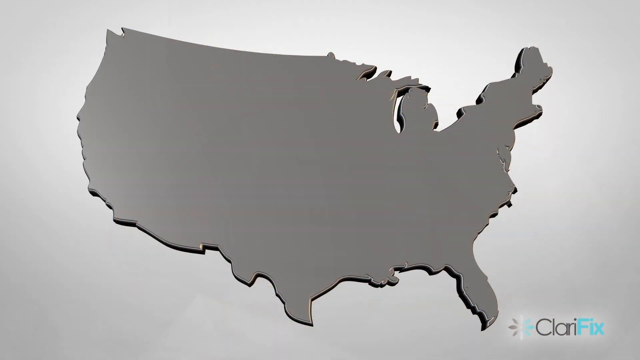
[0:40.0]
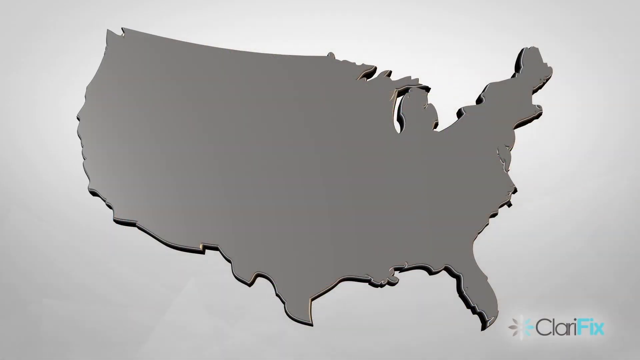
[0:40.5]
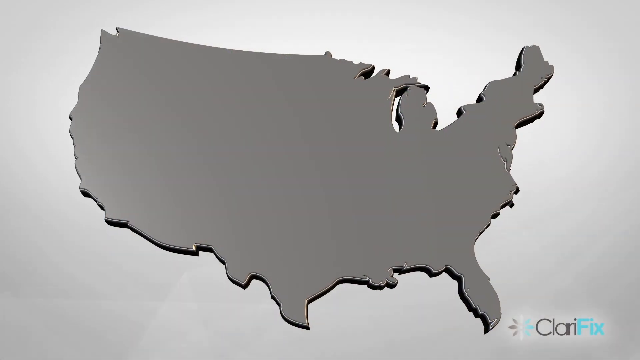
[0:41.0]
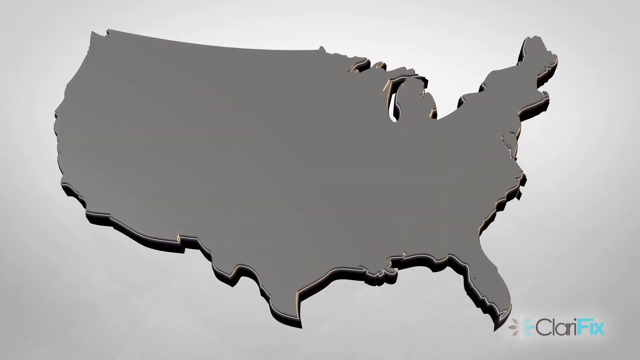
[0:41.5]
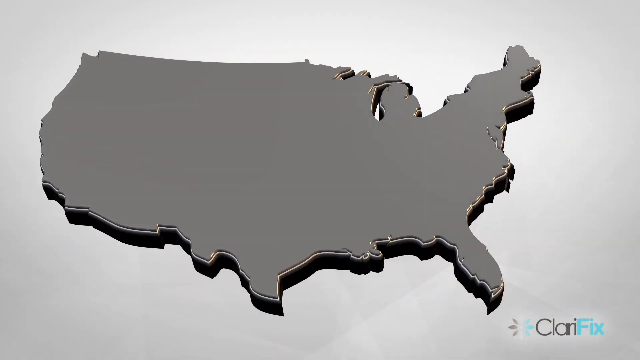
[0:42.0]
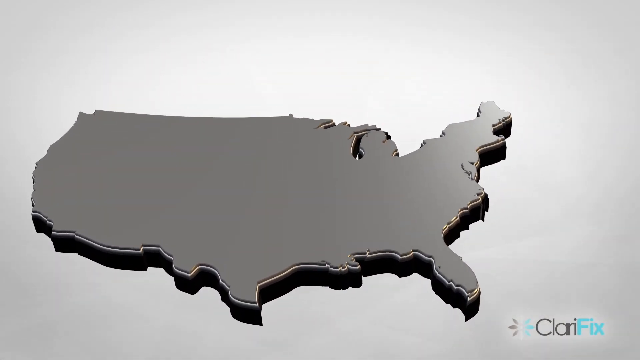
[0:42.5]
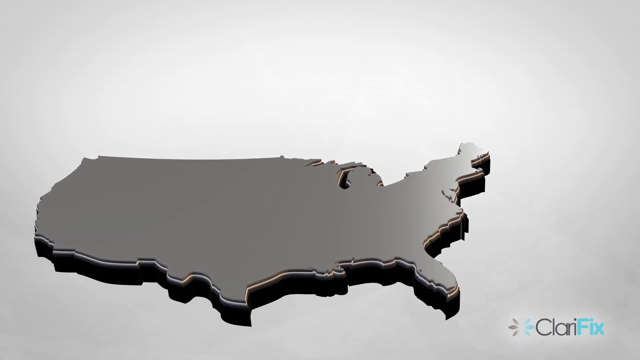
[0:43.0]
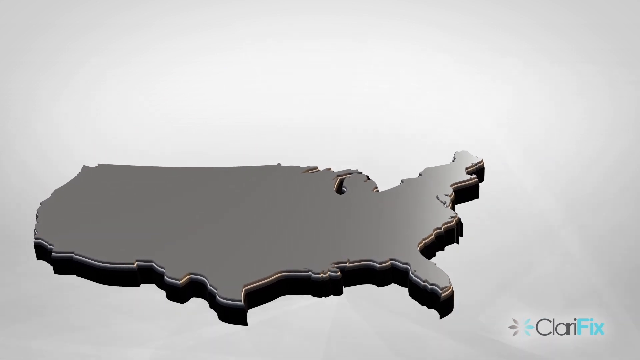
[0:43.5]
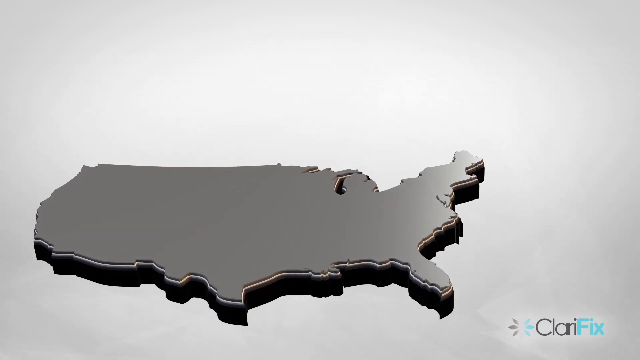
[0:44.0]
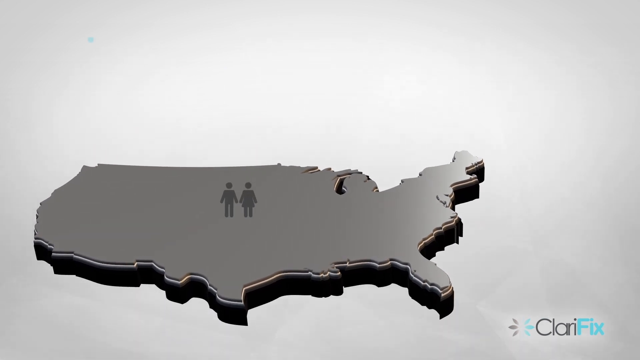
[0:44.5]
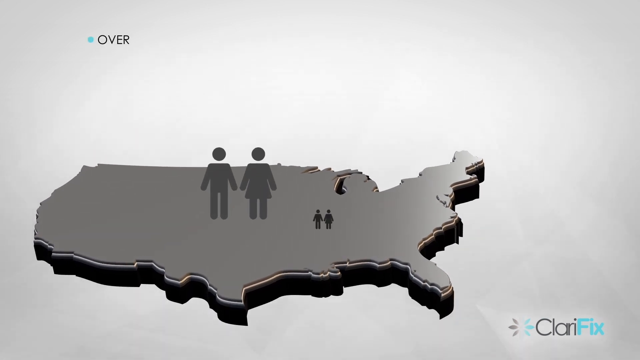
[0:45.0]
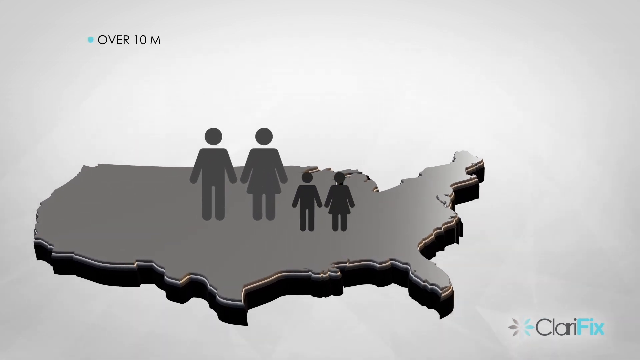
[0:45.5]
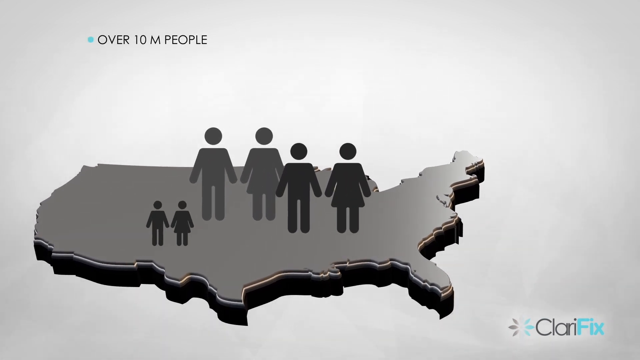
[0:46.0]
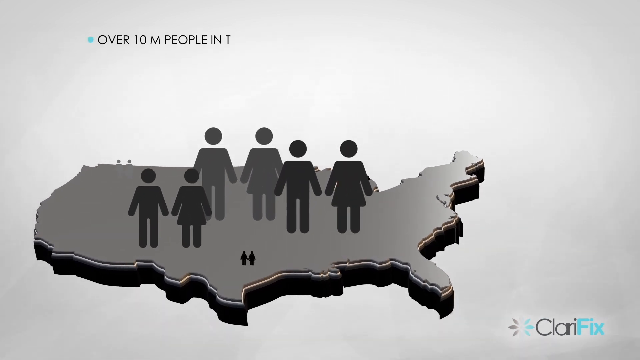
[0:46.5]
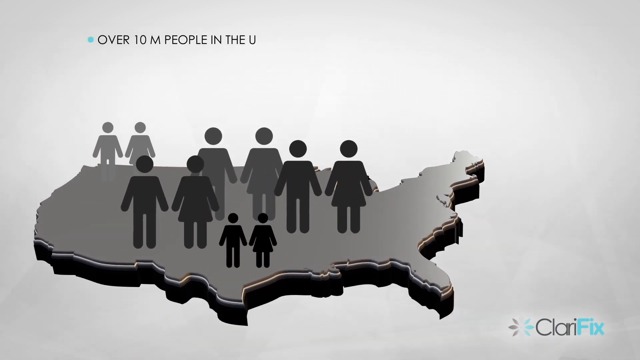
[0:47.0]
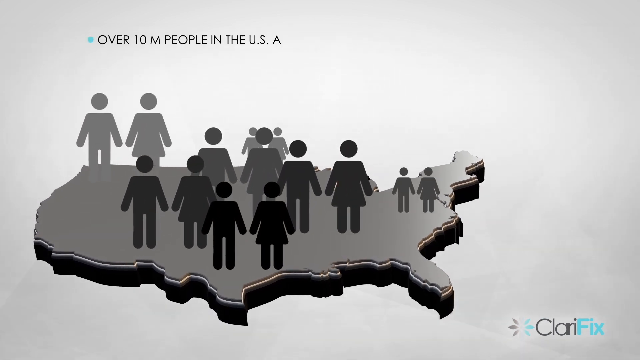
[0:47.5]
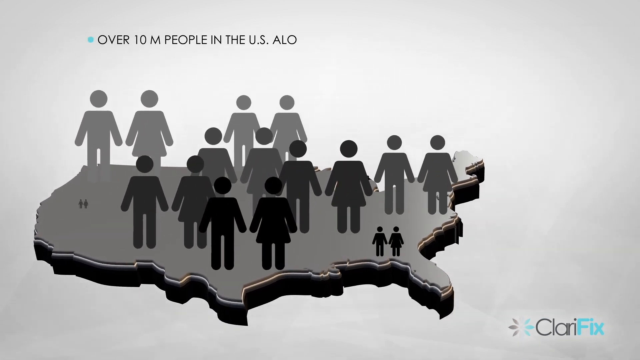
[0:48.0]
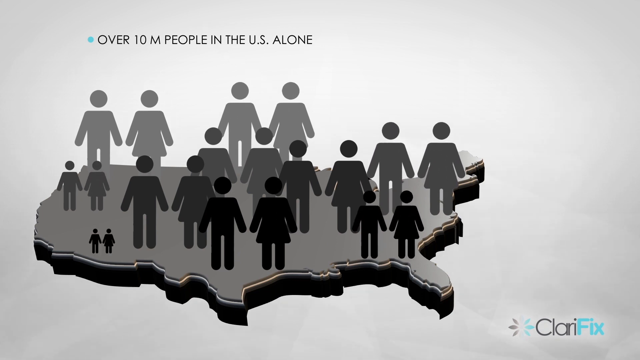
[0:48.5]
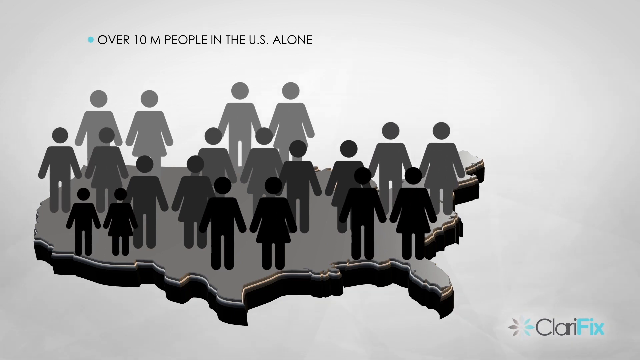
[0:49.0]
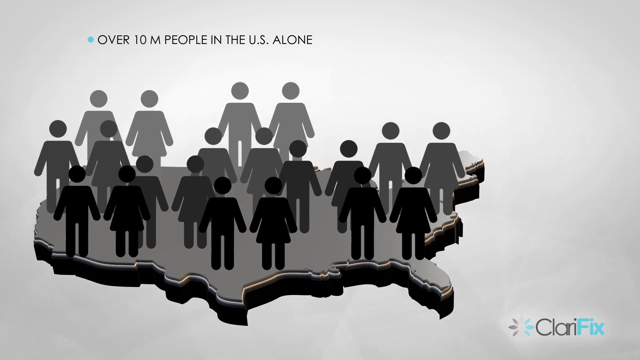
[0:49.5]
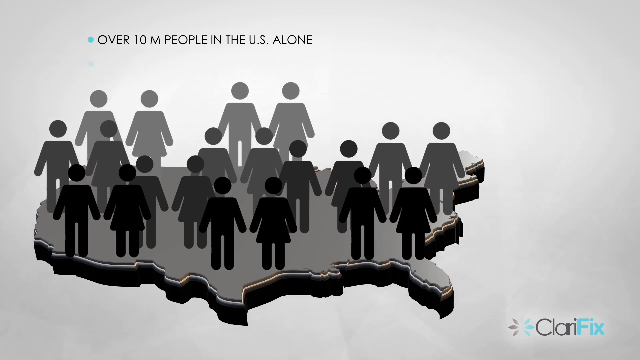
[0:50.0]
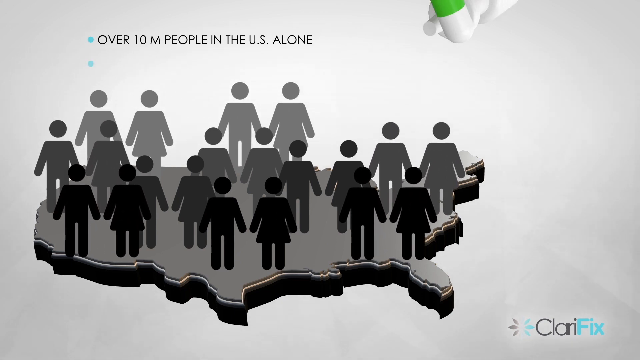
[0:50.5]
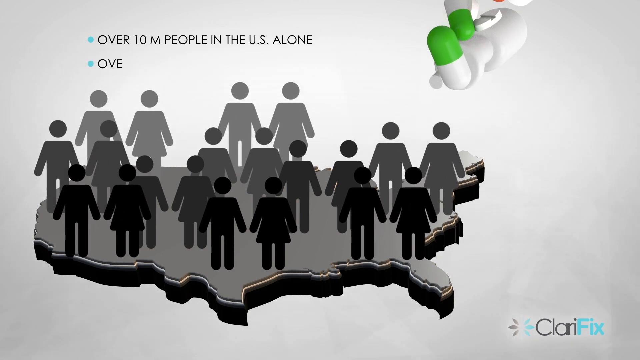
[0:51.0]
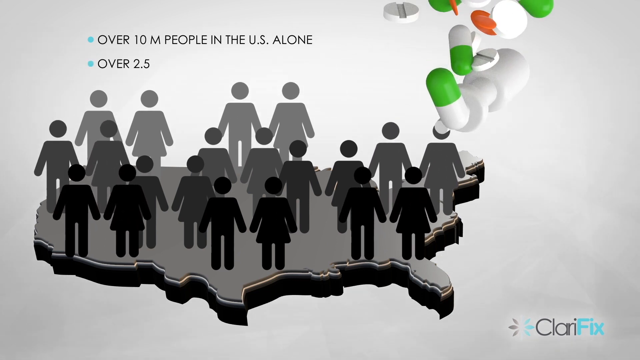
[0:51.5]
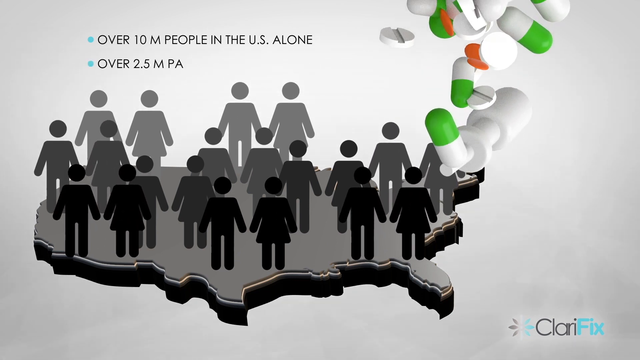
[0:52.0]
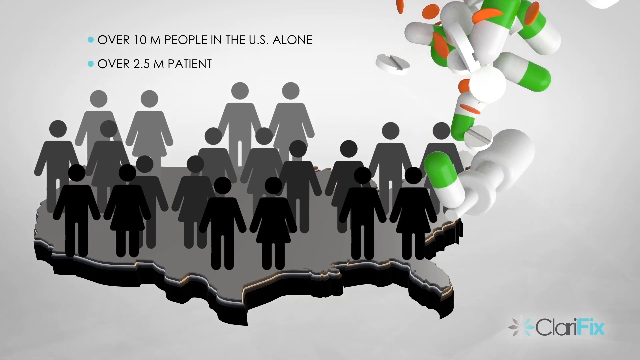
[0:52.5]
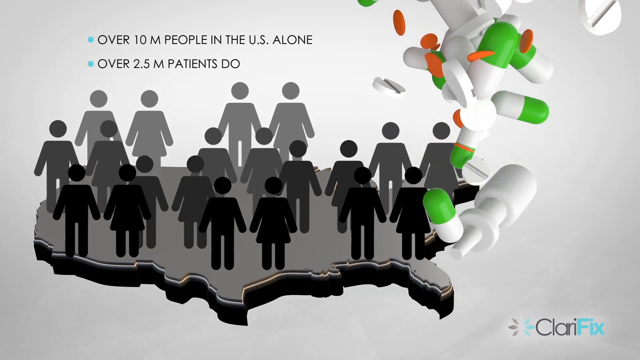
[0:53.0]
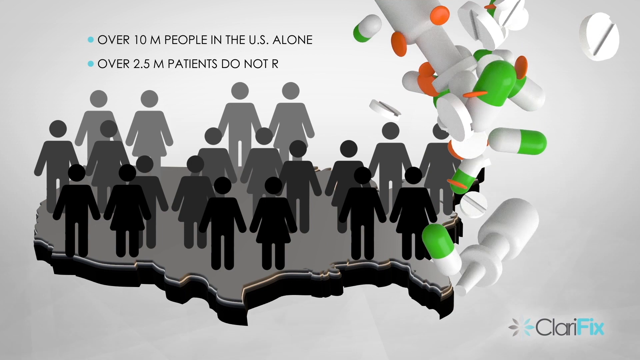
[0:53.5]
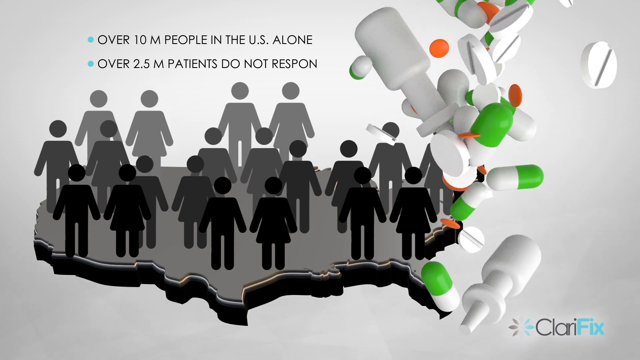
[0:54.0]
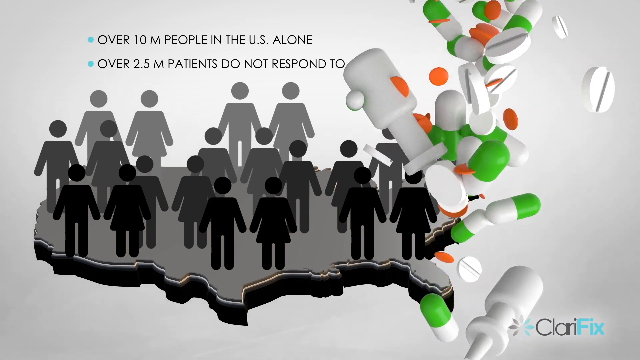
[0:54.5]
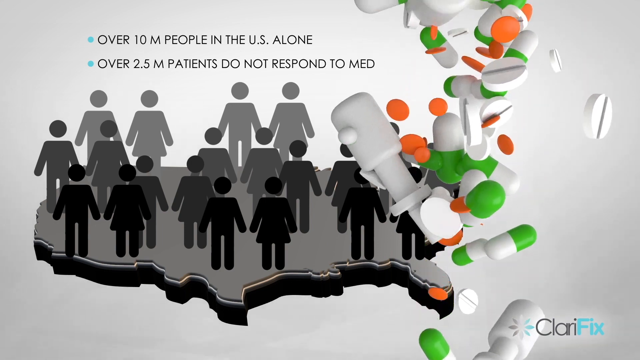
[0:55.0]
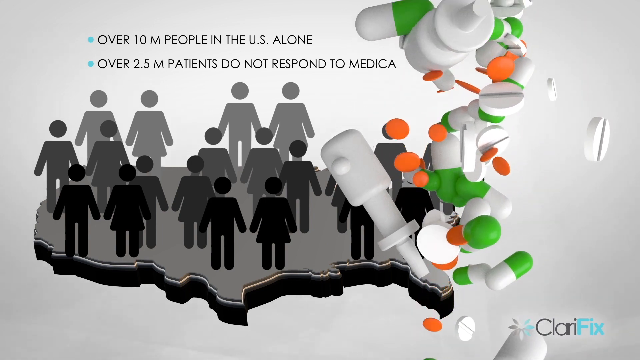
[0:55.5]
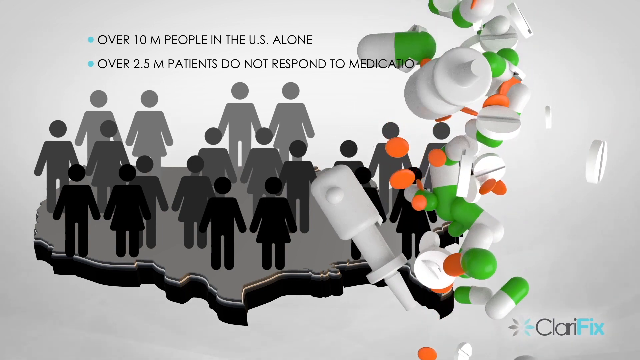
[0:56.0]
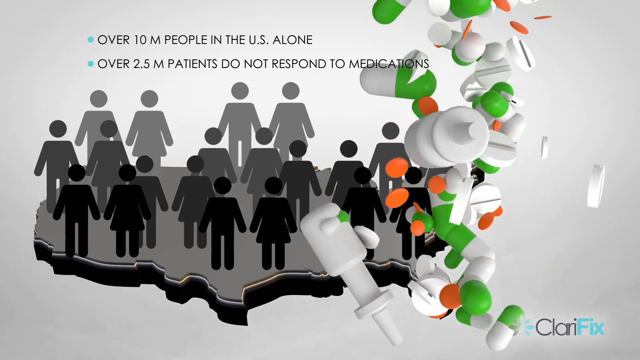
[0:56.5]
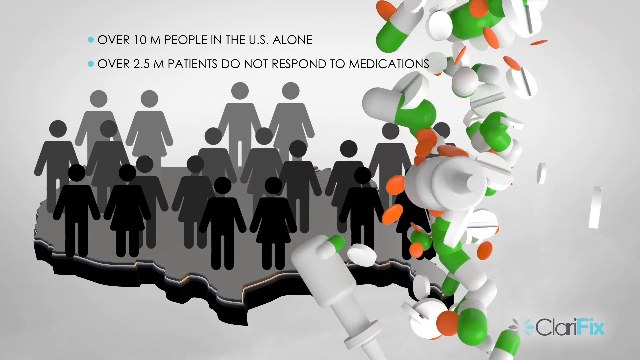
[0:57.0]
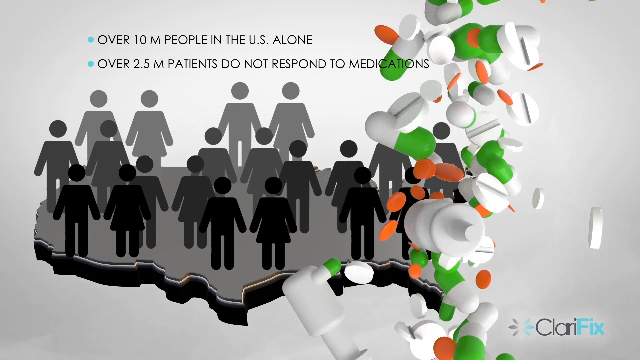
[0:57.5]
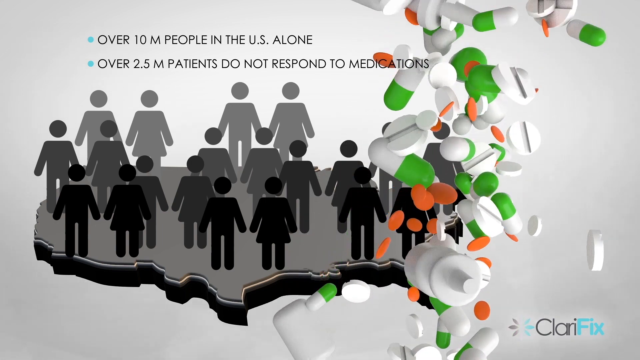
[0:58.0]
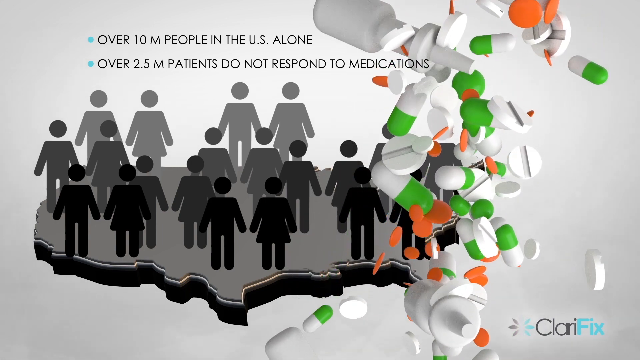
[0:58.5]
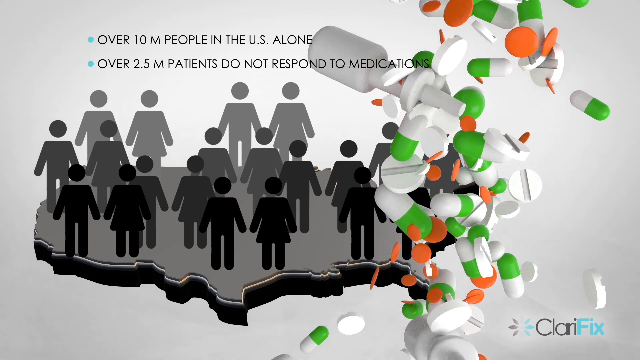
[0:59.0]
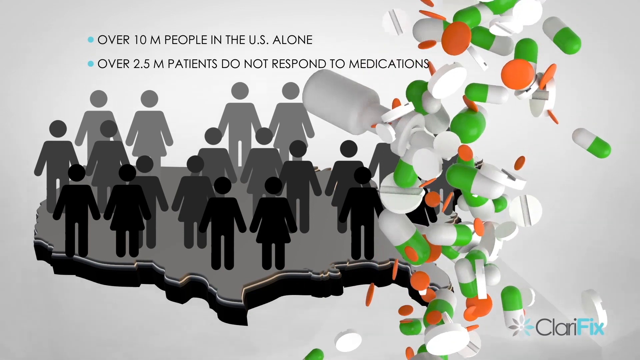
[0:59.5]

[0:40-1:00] On a light gray background is a museum-type 3D picture of a city map of the United States of America. The outline of America rotates and turns so its side is visible, almost like a puzzle piece, showing its edge. Several couples pop up on top of it, like the walking symbols for man and woman, many of them in gray, dark gray, light gray and black, showing up across America. Text then comes up with blue bullet points: "over 10 million people in the US alone" and "over 2.5 million patients do not respond to medications." On the side, a bunch of CGI pills start falling: tablets and capsules. The capsules are green on one side and white on the other; some of the tablets are white with a demarcation line in the middle, and some are orange. Nasal spray bottles also start to fall.